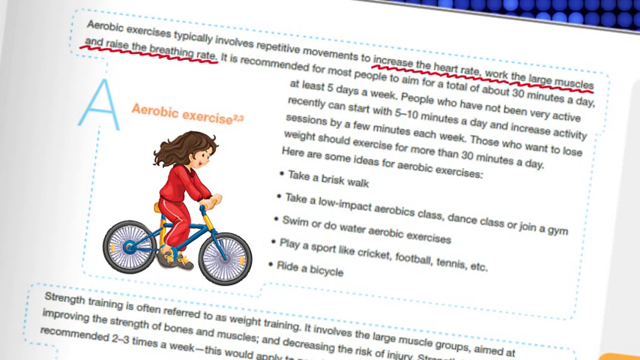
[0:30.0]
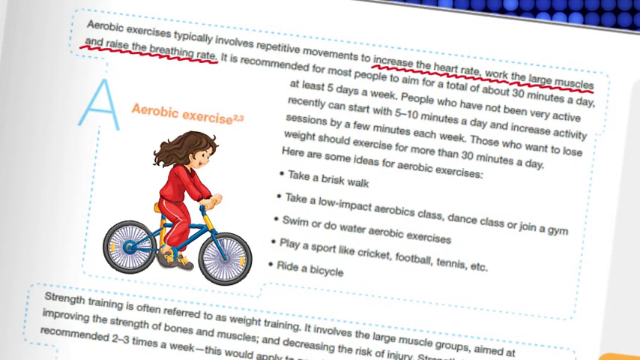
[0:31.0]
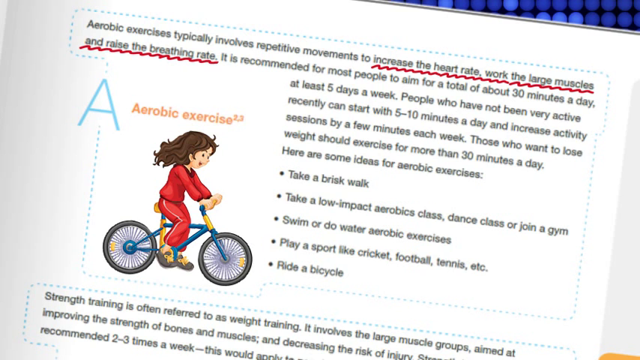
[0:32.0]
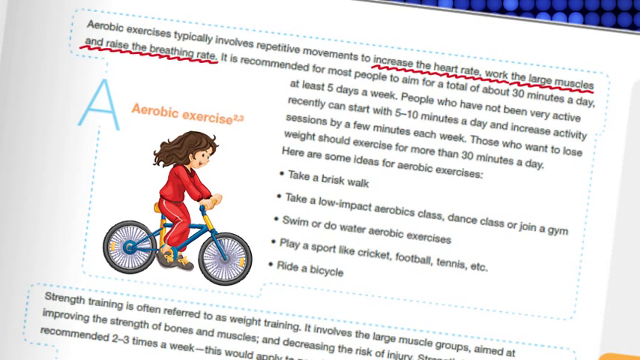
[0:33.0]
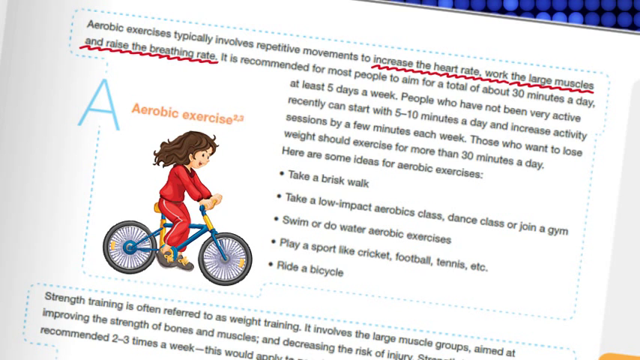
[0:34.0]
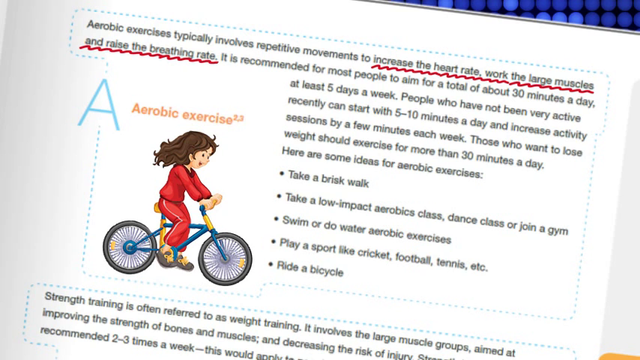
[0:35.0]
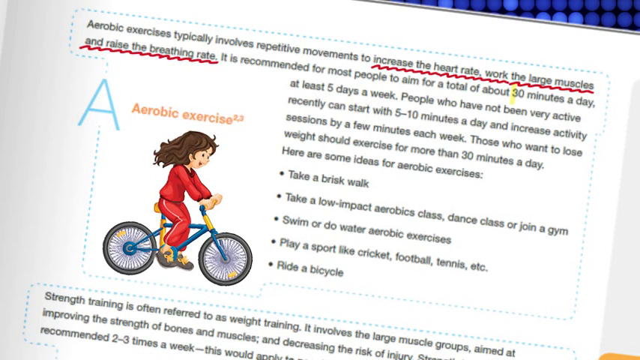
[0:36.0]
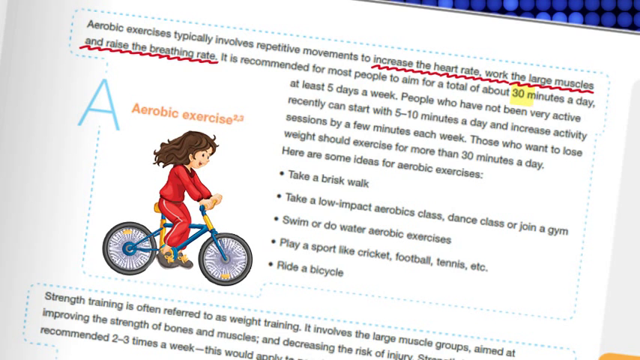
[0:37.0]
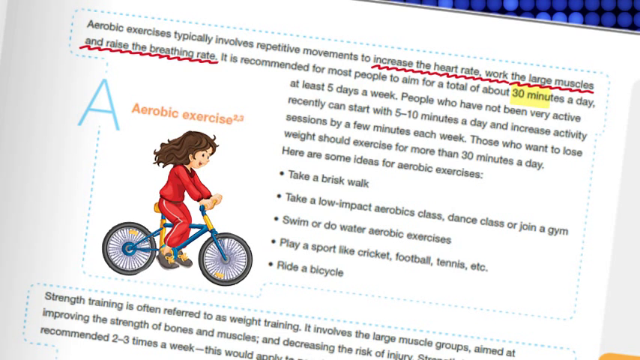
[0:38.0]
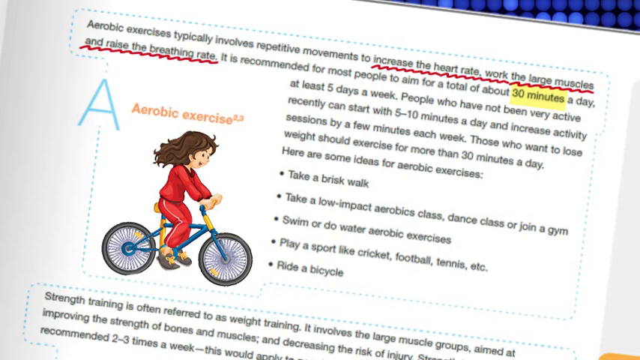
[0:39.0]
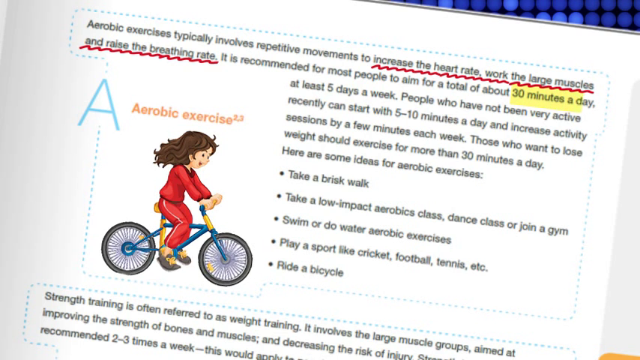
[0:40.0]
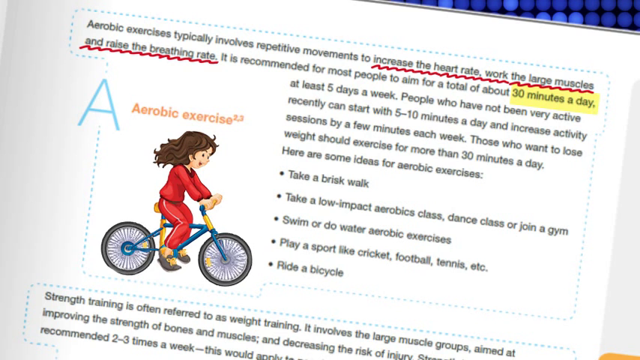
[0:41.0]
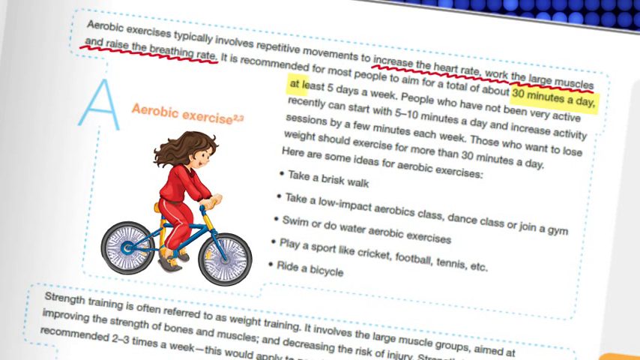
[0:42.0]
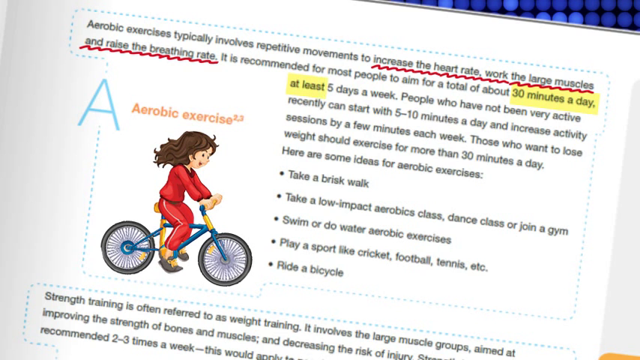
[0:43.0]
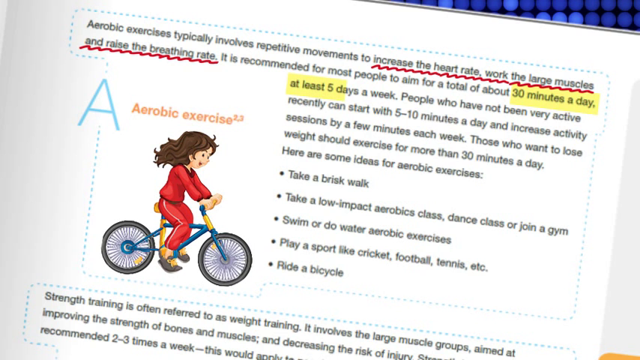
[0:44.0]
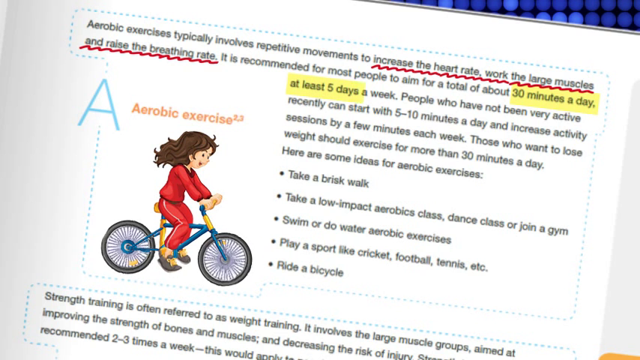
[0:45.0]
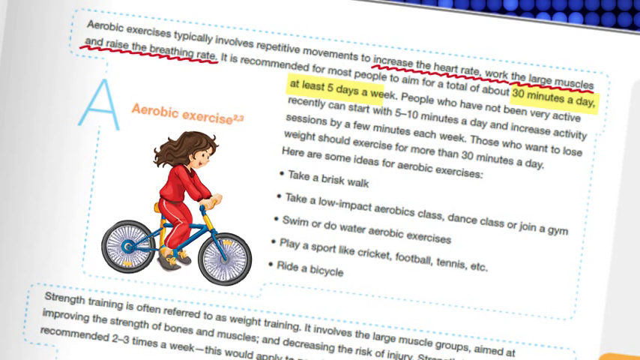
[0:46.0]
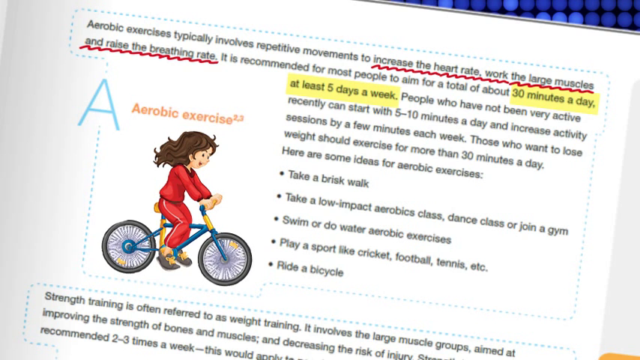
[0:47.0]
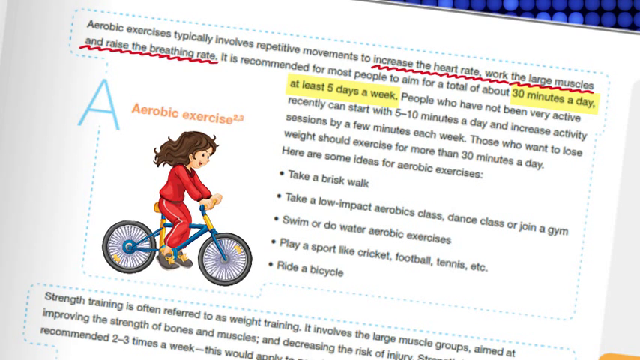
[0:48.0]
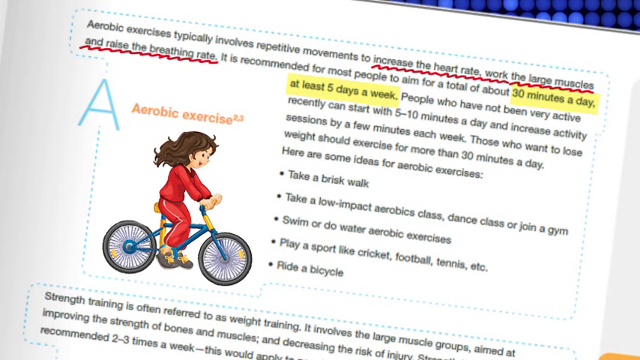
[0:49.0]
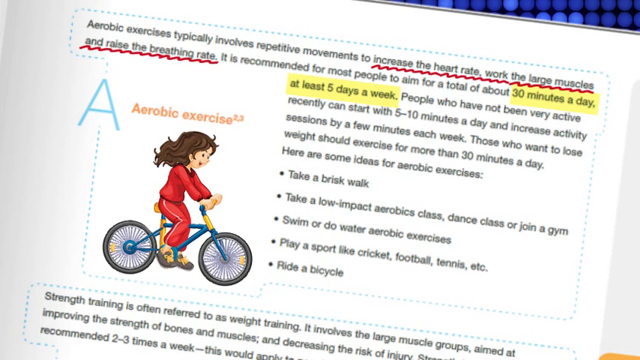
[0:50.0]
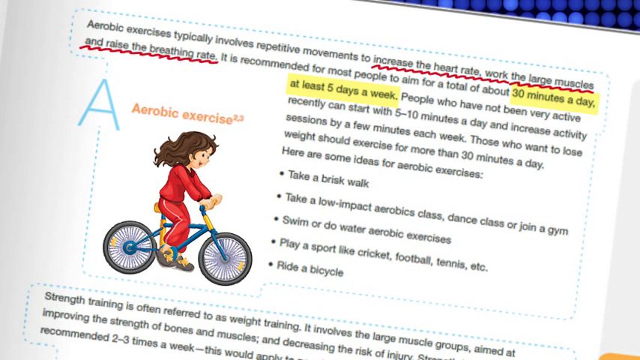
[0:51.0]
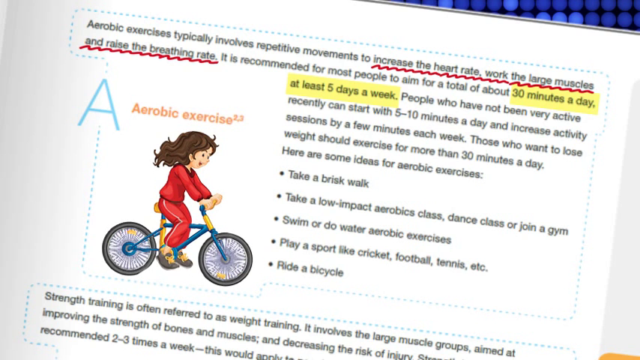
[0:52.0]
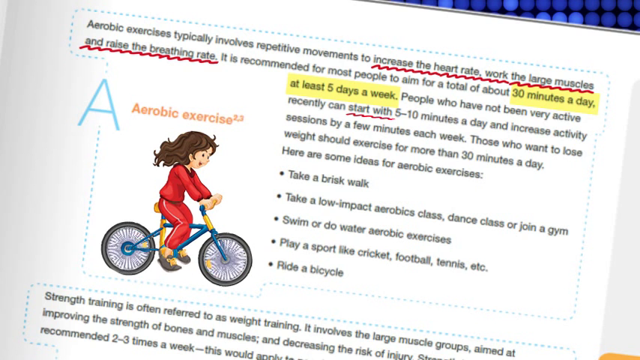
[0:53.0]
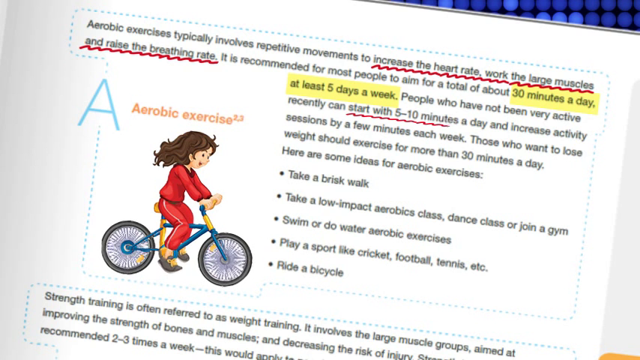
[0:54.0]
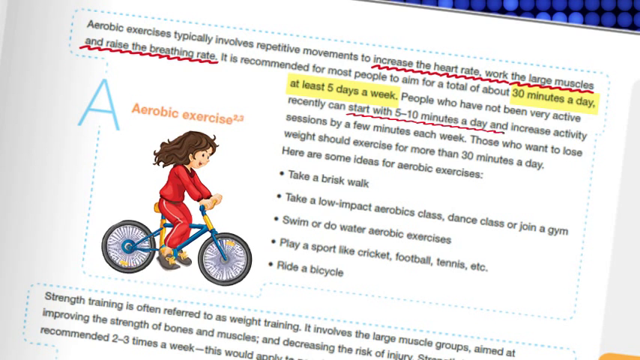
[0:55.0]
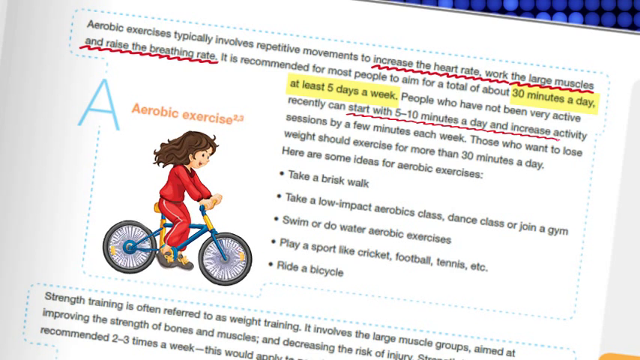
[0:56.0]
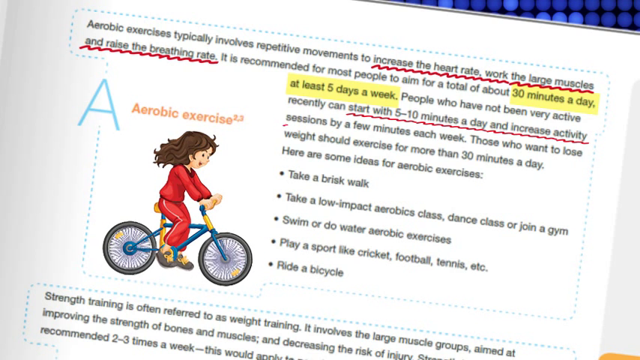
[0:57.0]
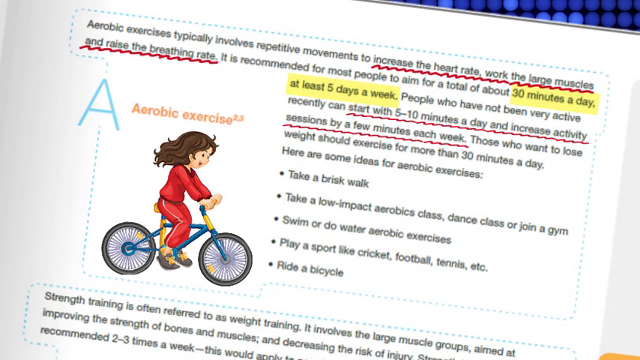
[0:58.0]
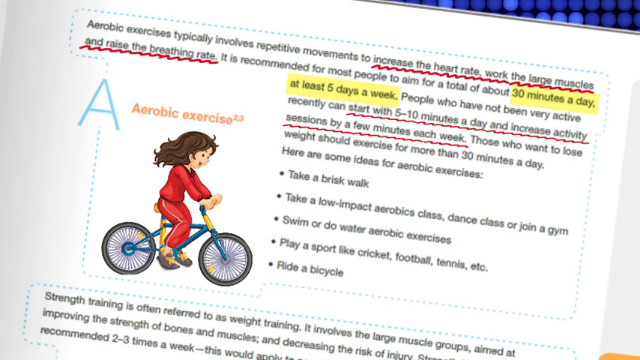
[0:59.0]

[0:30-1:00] The page looks mostly static except that "30 minutes a day at least five days a week" is highlighted in yellow. The page also says "start with five to ten minutes a day and increase activity sessions by a few minutes each week," and that part is underlined with a red wavy line, like the text above it. Some portions of the book are underlined with the red squiggly line and others are highlighted in yellow like a highlighter. Meanwhile the bicycle wheels keep turning and the girl keeps moving her legs. The shot is a close-up of roughly half the page, the upper half.